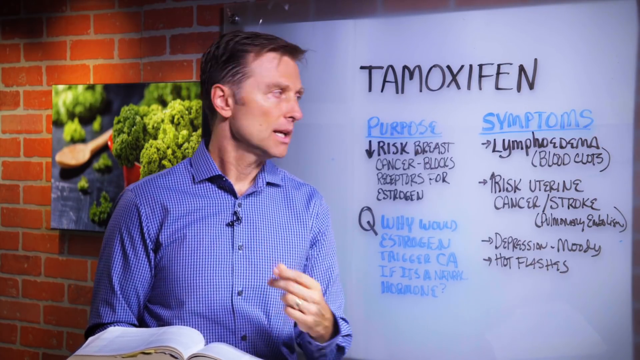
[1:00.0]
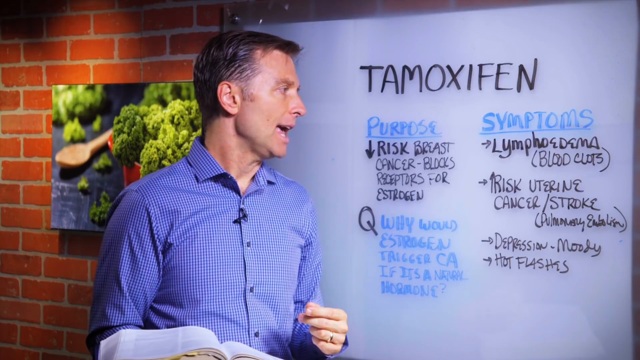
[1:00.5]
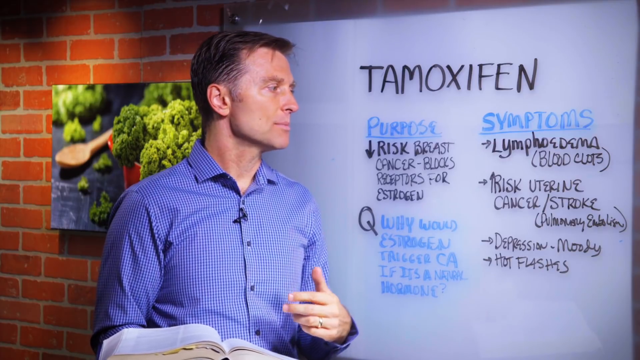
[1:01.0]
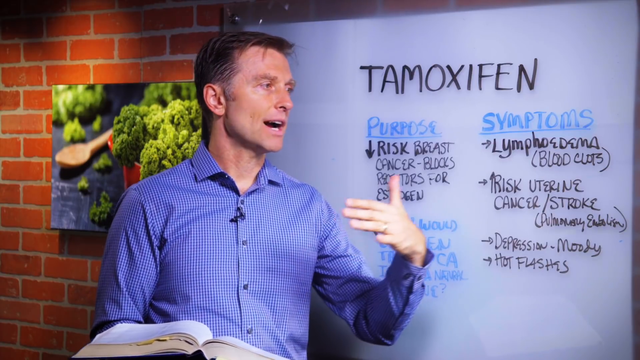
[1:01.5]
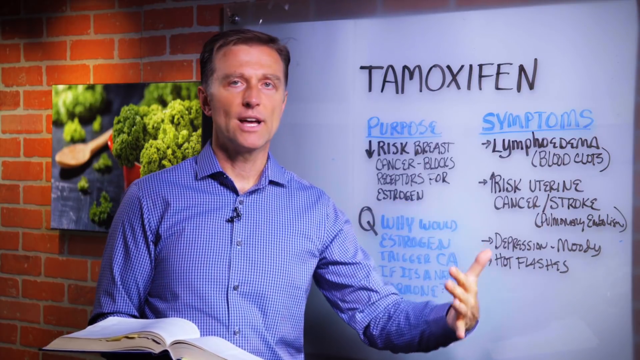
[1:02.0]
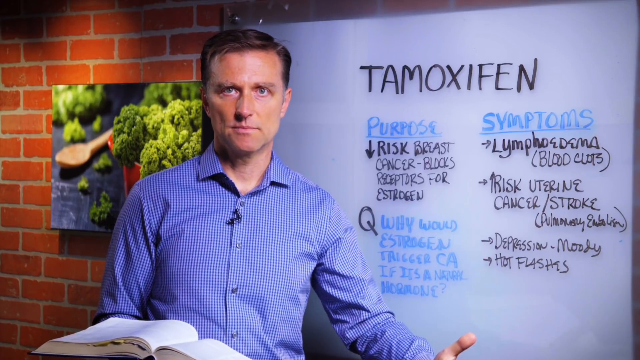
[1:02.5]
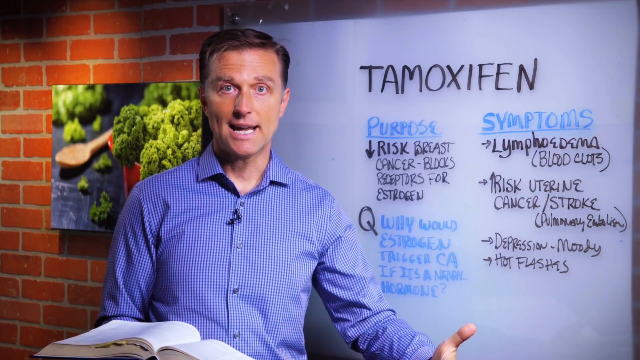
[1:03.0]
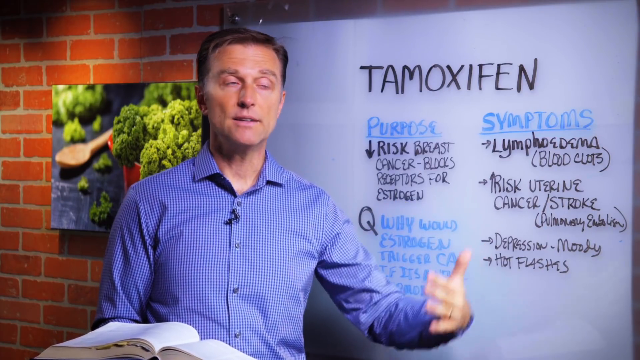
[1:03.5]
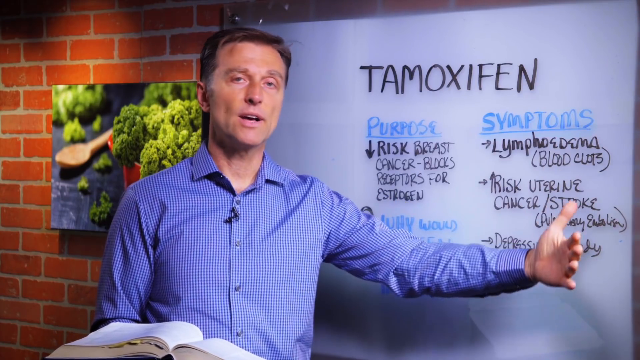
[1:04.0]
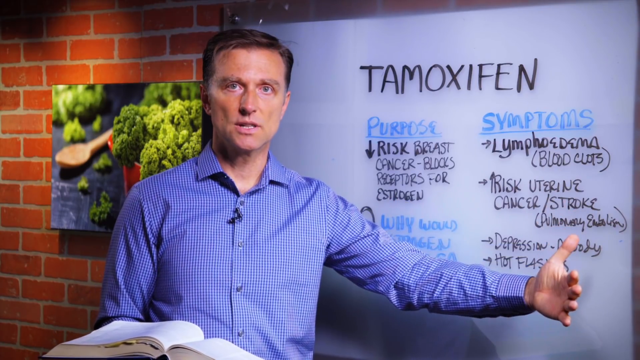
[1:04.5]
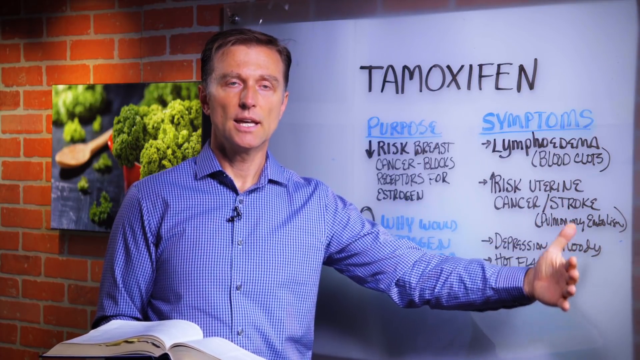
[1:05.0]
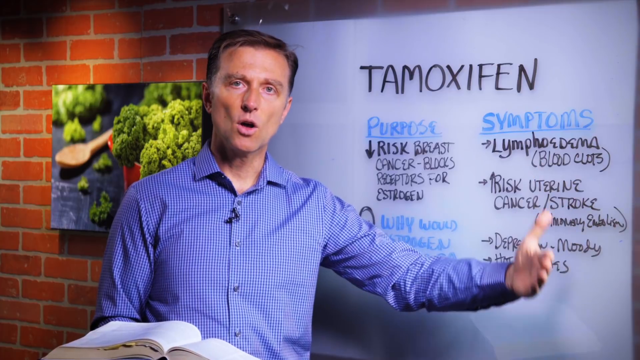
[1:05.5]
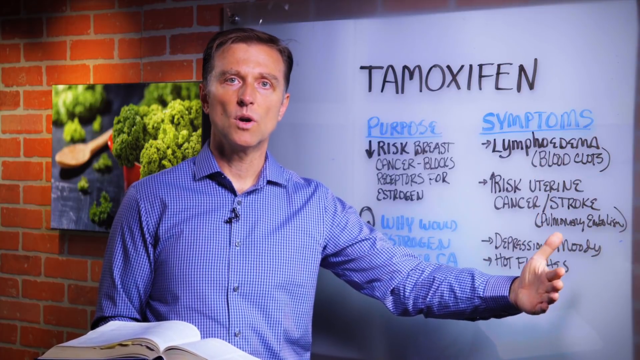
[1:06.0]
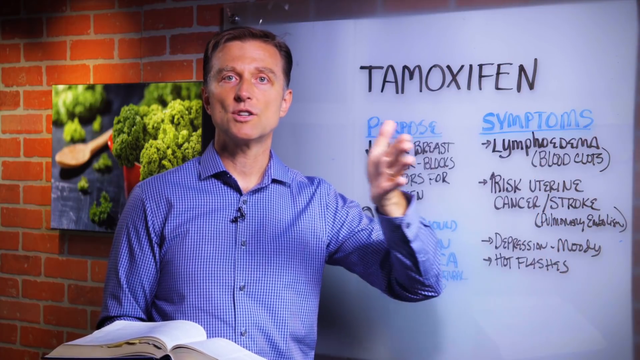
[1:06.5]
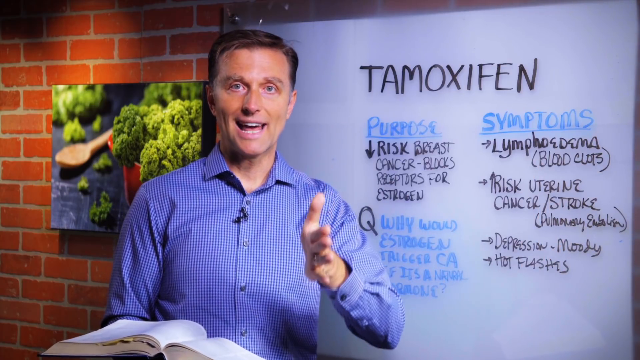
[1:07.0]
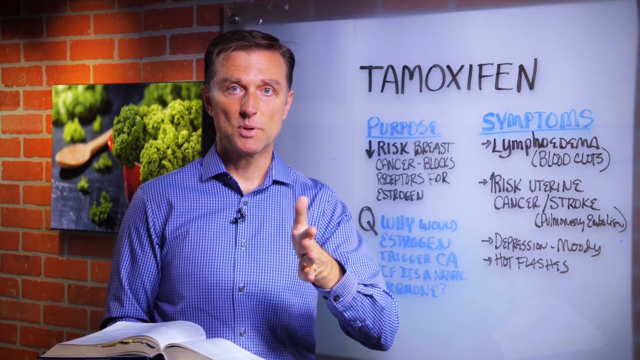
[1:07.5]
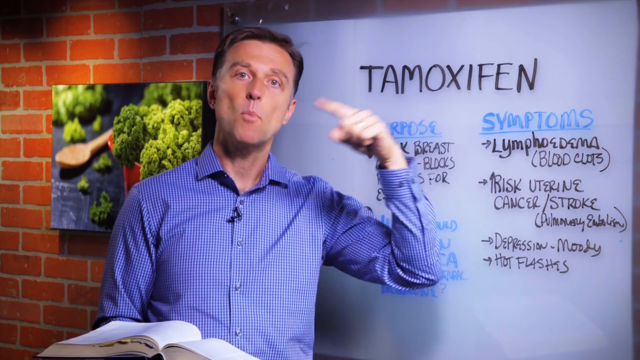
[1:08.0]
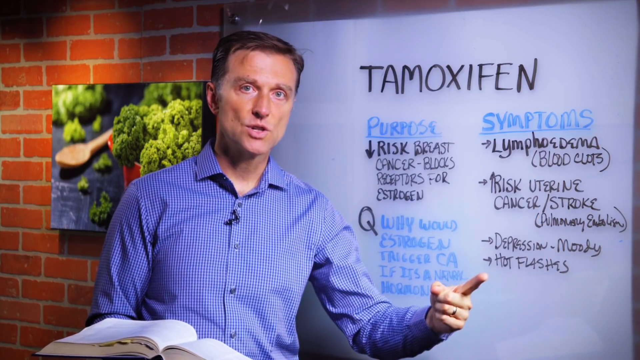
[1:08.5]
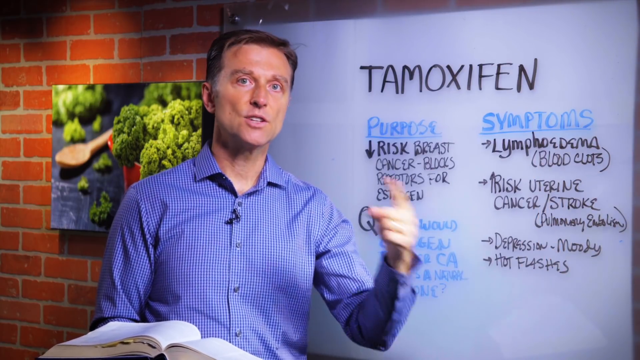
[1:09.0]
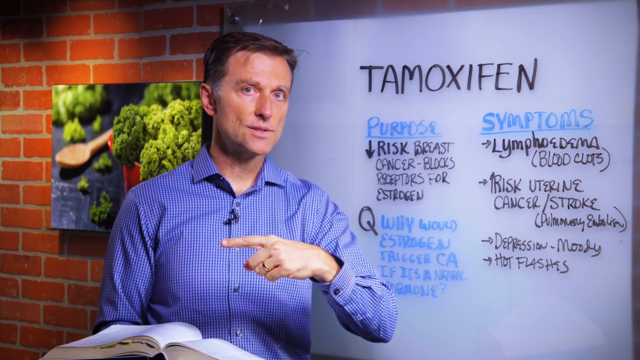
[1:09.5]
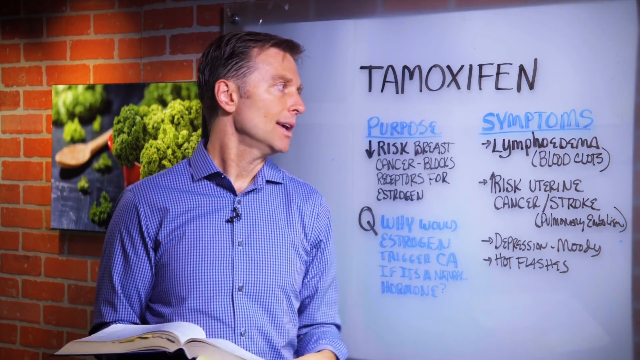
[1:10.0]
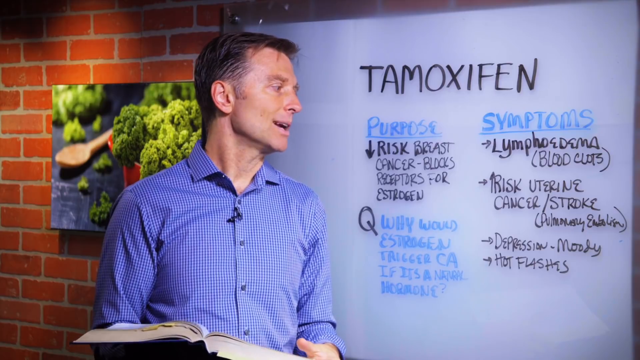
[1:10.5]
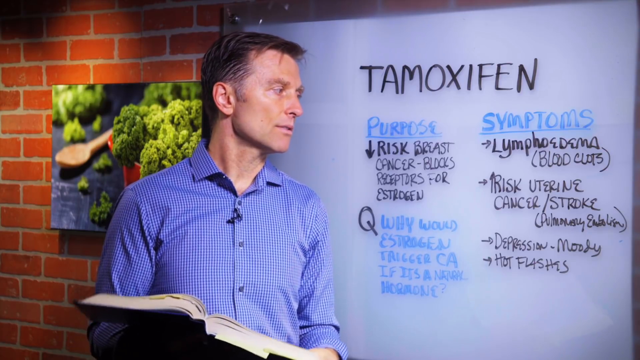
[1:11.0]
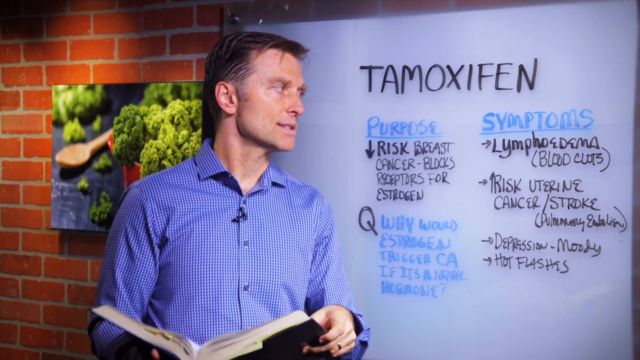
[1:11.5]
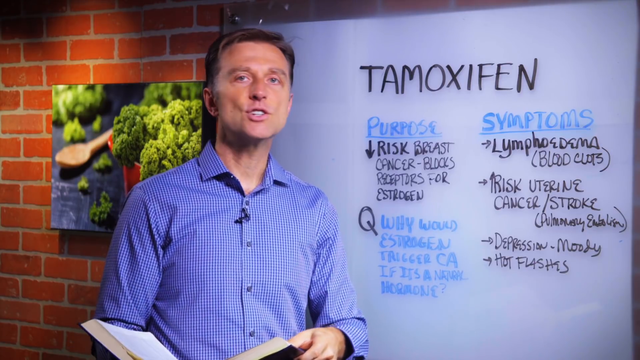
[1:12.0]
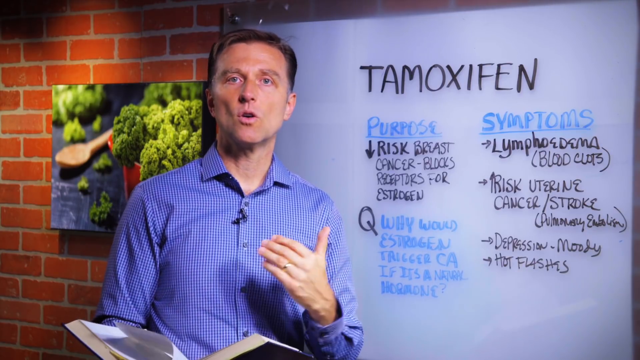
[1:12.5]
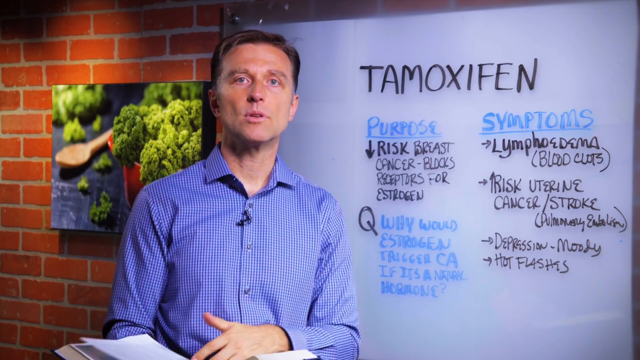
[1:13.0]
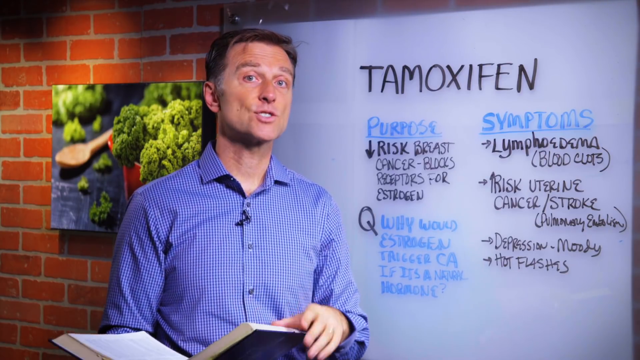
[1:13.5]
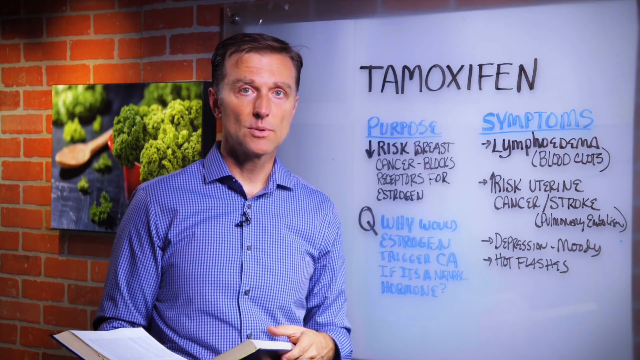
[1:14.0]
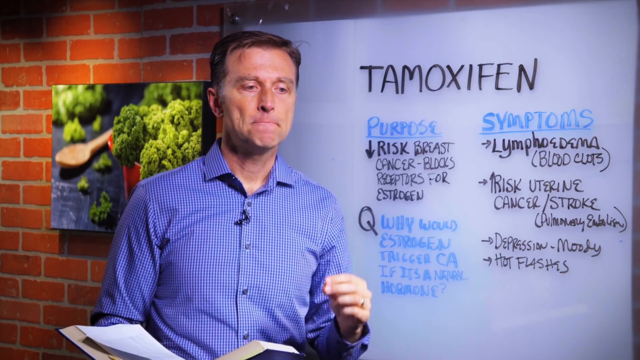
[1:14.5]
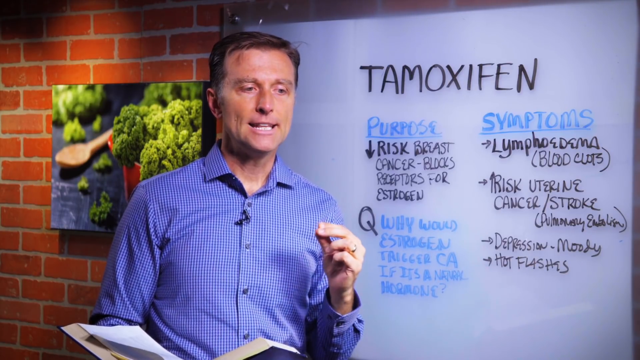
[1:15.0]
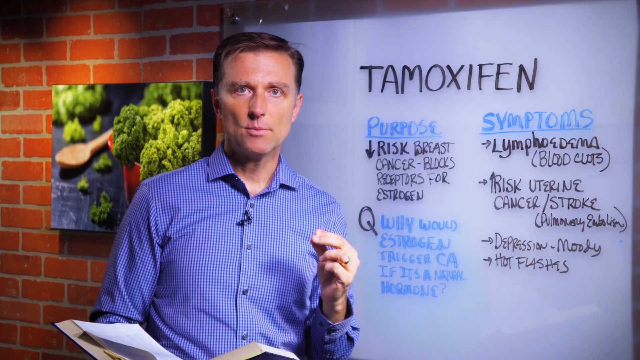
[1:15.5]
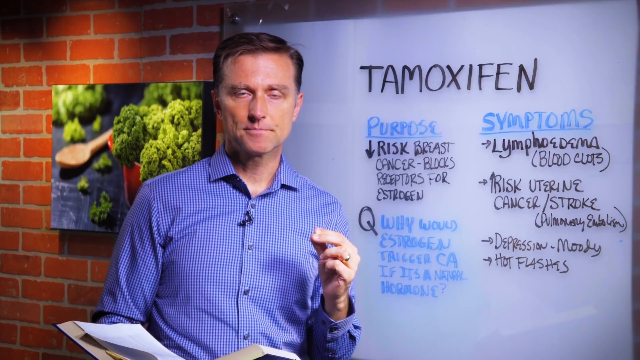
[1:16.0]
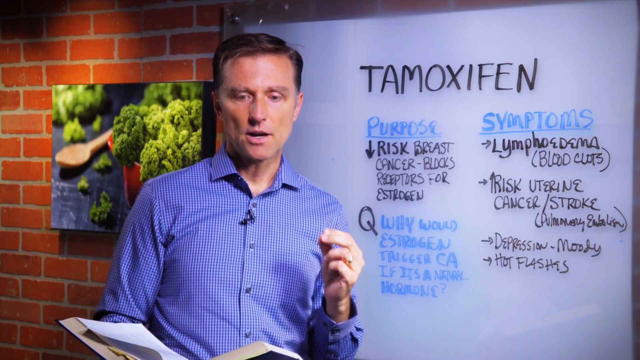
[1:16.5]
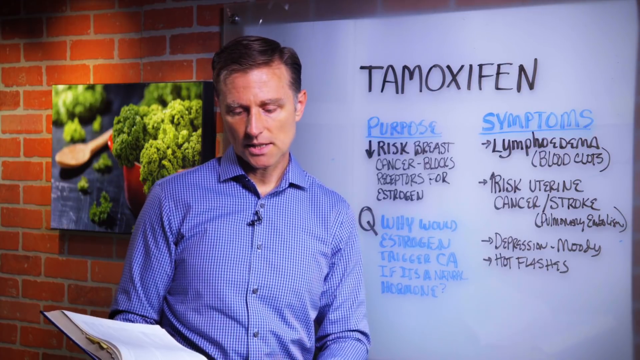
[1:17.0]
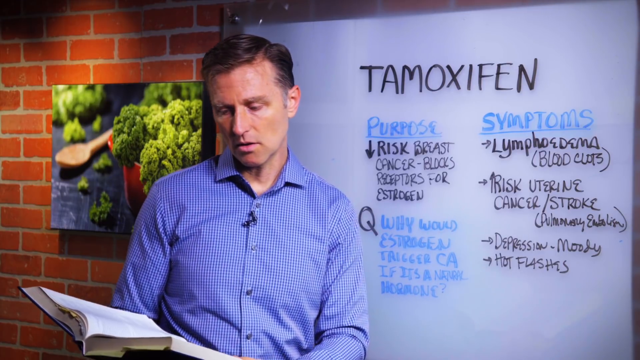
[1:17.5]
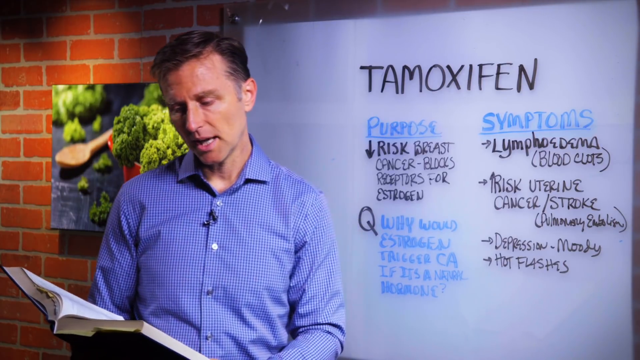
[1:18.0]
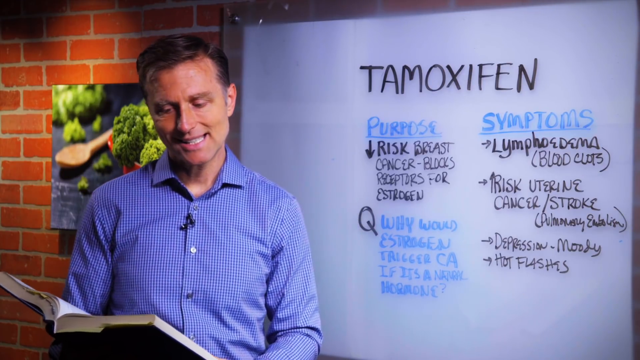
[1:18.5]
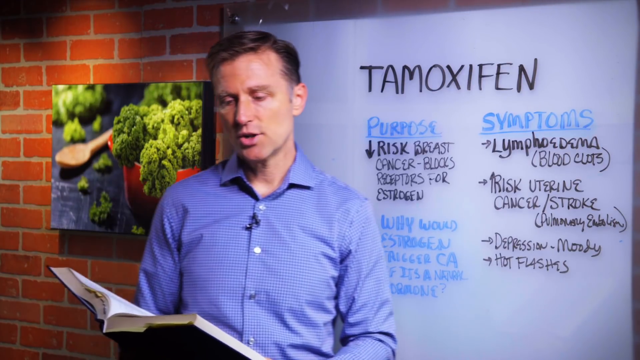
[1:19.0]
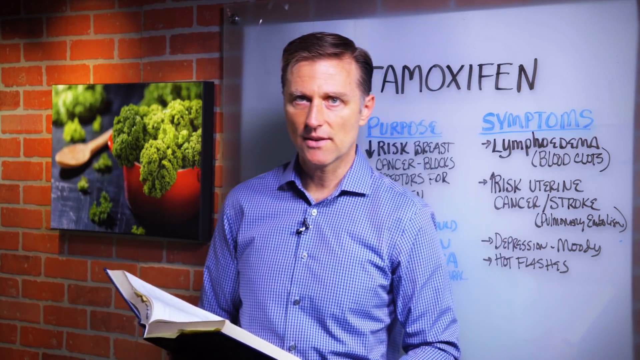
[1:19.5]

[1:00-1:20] A white man in a button-down shirt with a small checkered pattern, looking blue and gray, stands in front of a whiteboard that says "tamoxifen" and carries notes: "purpose to reduce risk of breast cancer blocks receptors for estrogen", "question, why would estrogen trigger CA if it's a normal hormone?" and "symptoms, lymphedema, blood clots, increased risk uterine cancer / stroke, pulmonary embolism, depression, moody, hot flashes". Behind him on the brick wall is an enlarged photo of a lot of broccoli in a red or orange container and one wooden spoon on the table. In his right hand he holds a hardcover book that says "toxicology", gesticulating with his hand. He looks in the book, then kind of motions back towards the board and then back towards the book.